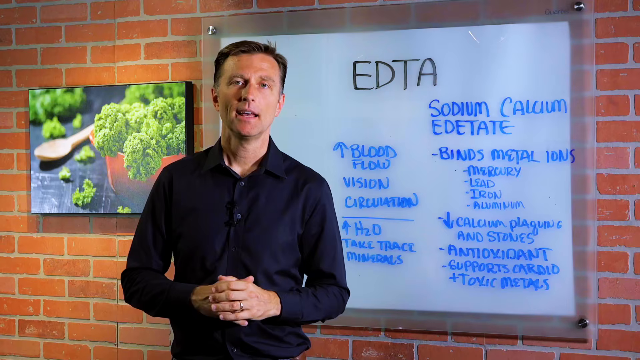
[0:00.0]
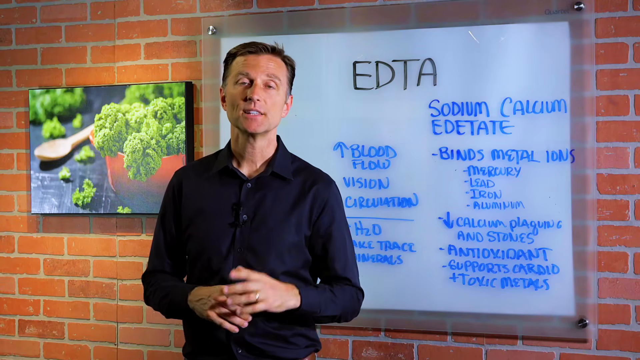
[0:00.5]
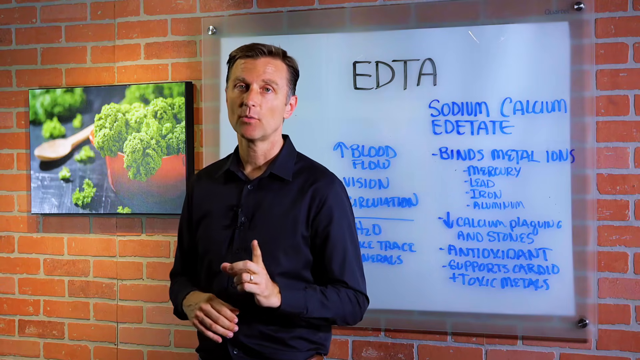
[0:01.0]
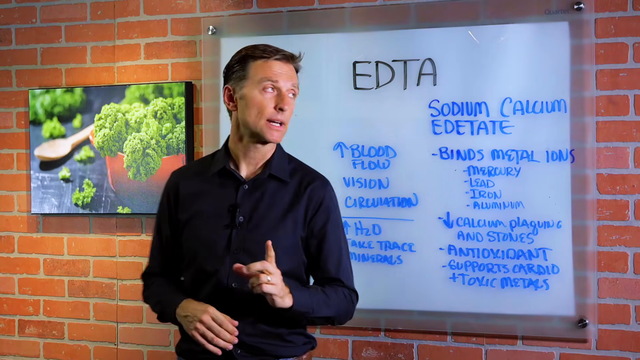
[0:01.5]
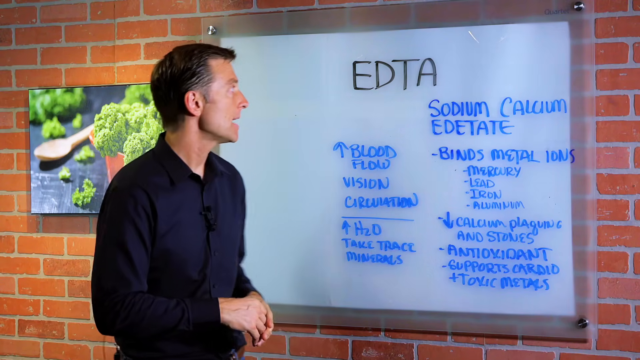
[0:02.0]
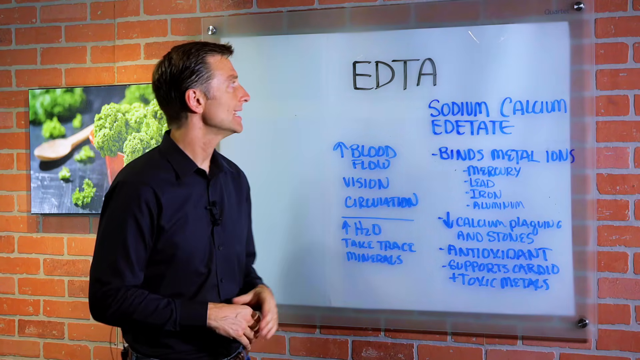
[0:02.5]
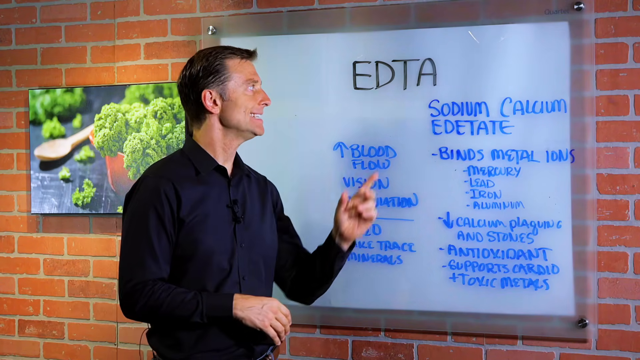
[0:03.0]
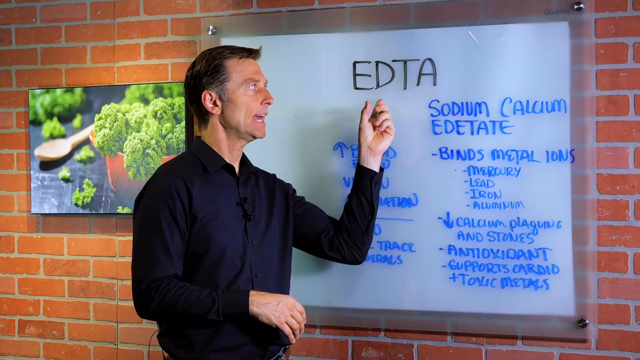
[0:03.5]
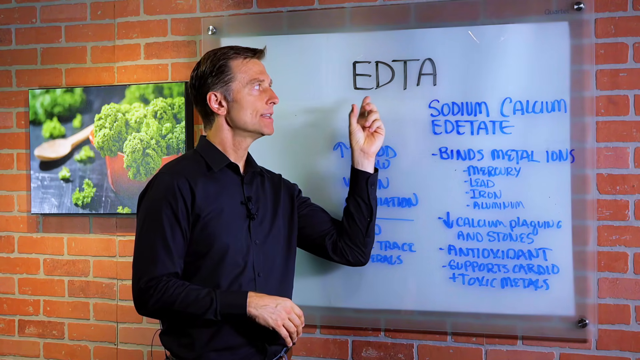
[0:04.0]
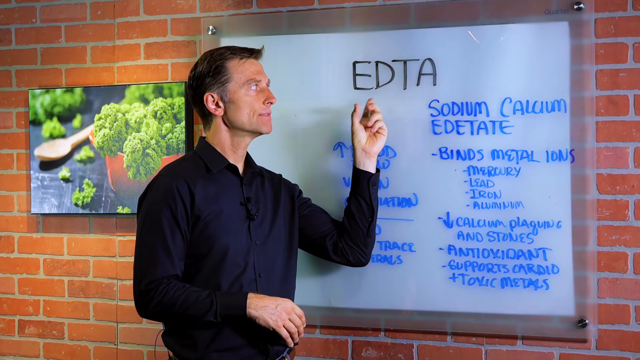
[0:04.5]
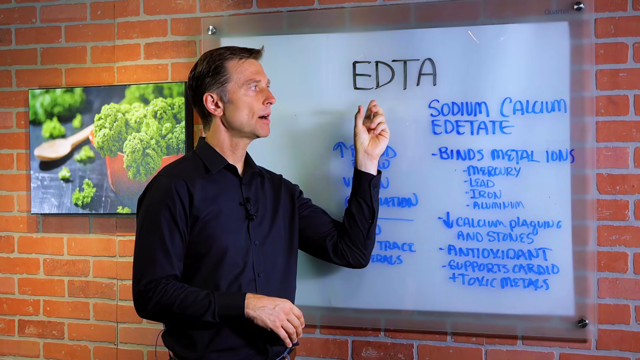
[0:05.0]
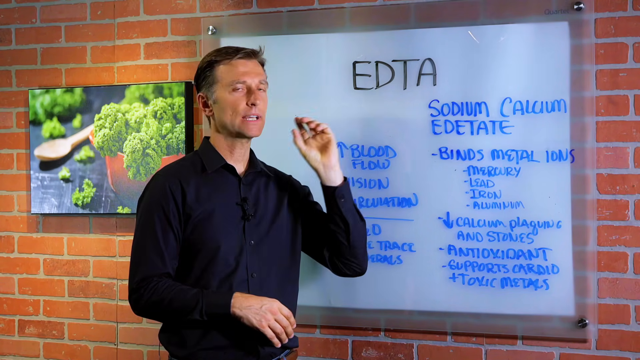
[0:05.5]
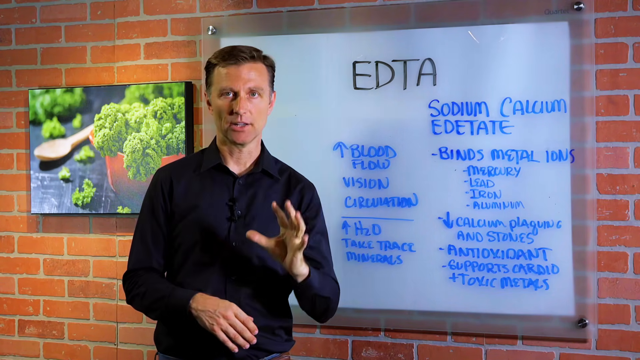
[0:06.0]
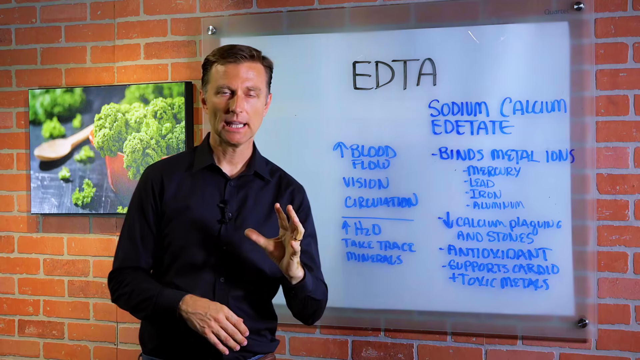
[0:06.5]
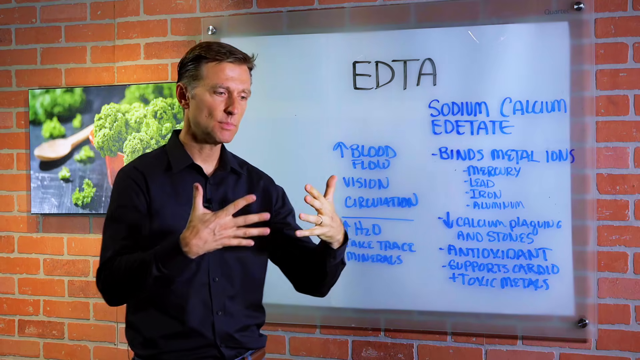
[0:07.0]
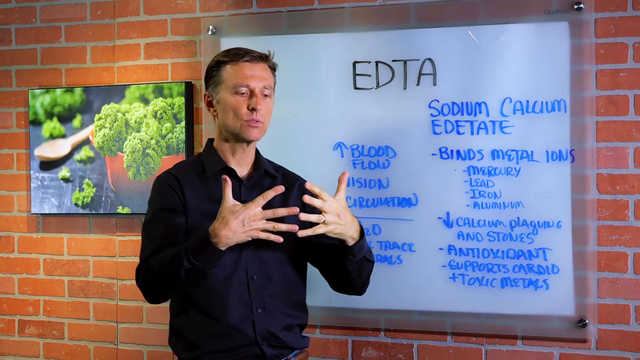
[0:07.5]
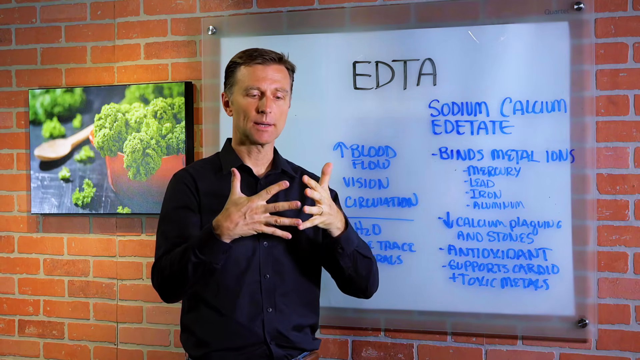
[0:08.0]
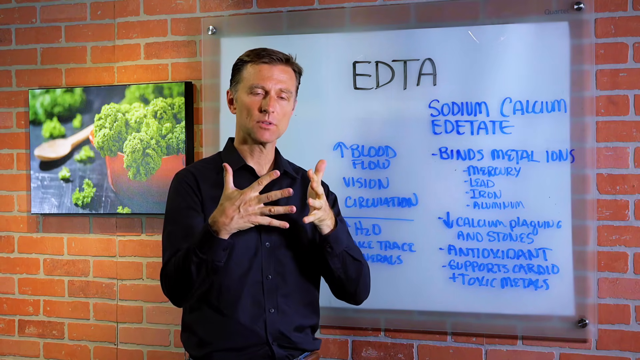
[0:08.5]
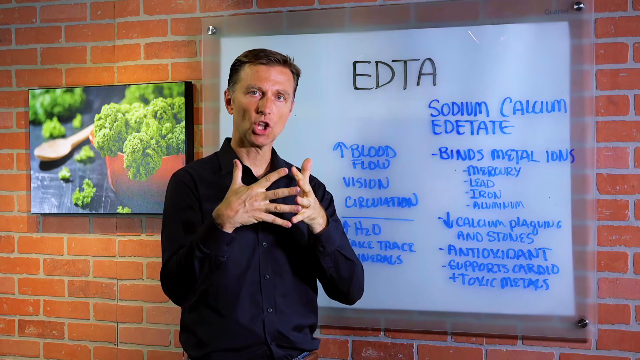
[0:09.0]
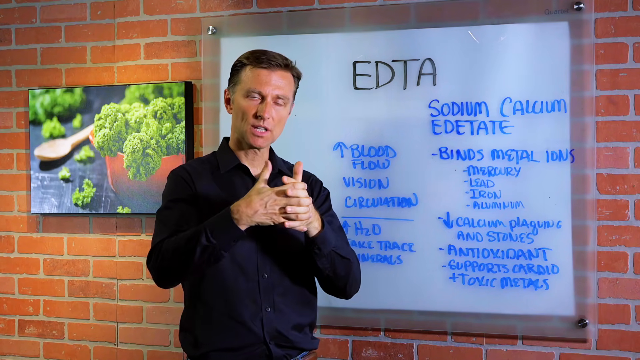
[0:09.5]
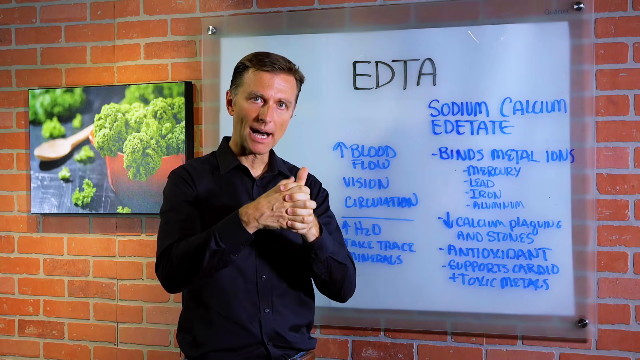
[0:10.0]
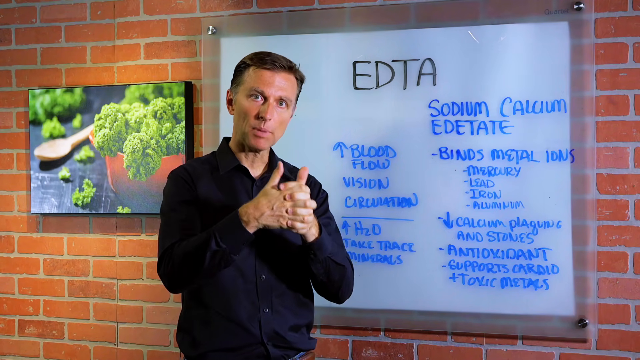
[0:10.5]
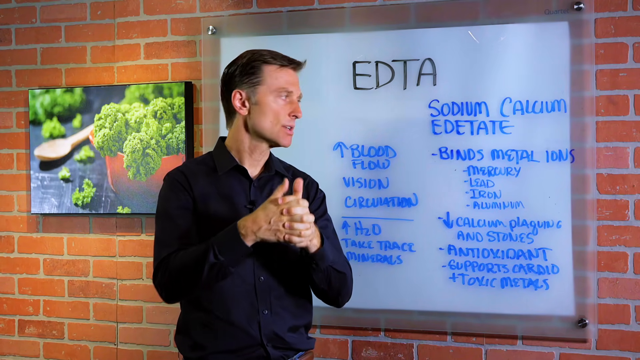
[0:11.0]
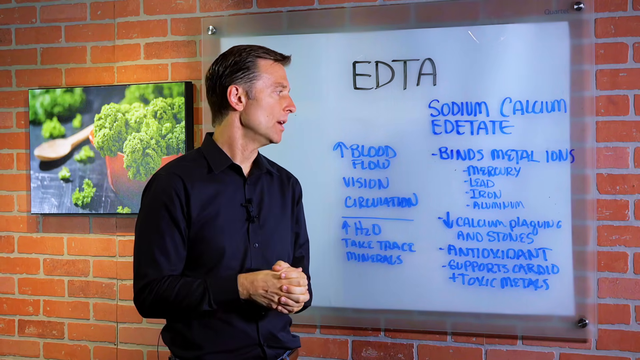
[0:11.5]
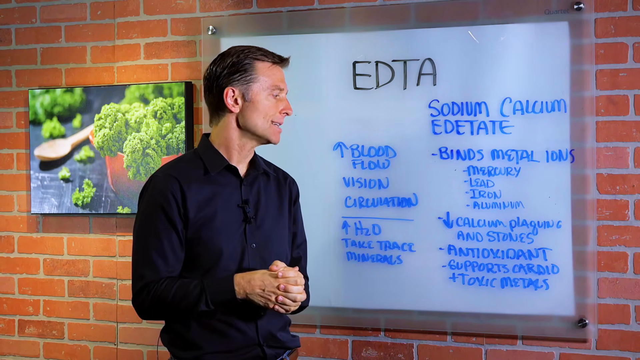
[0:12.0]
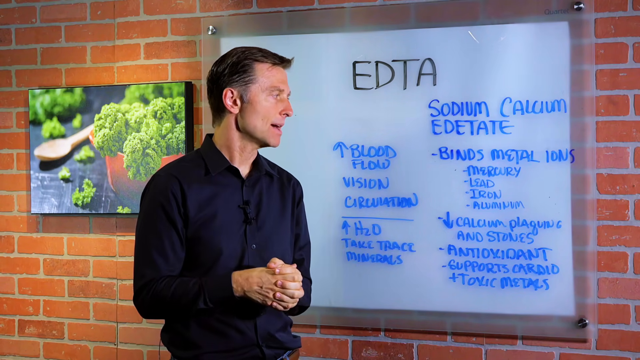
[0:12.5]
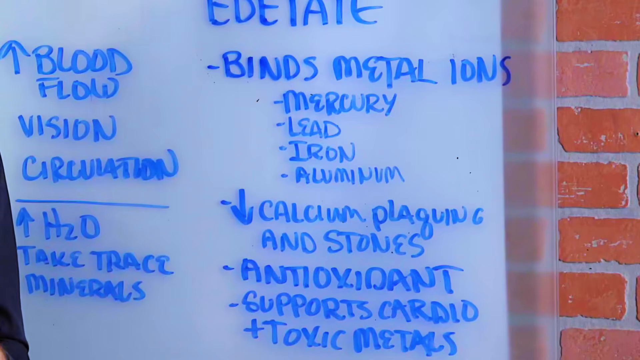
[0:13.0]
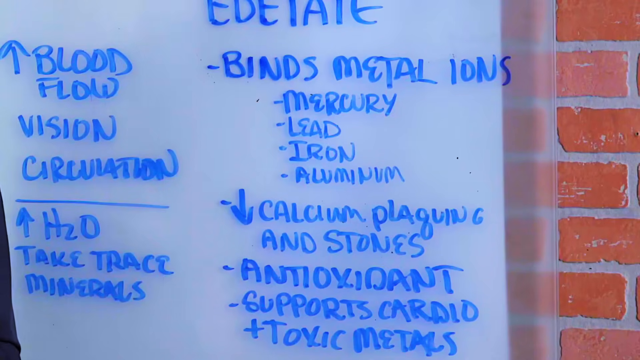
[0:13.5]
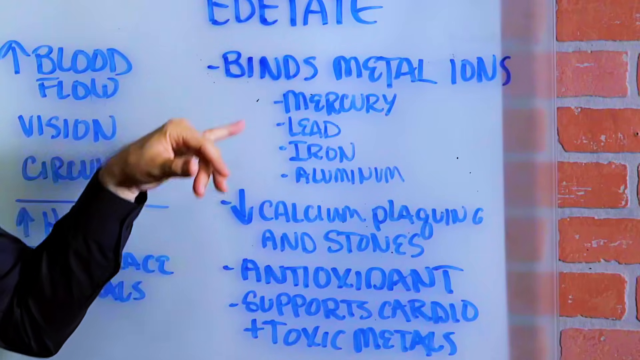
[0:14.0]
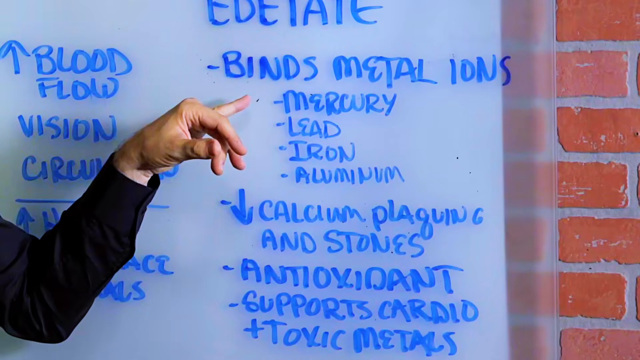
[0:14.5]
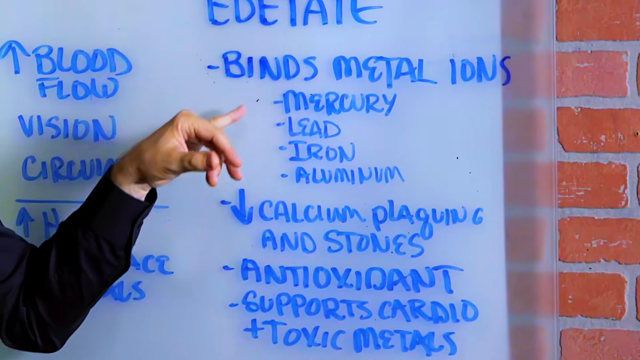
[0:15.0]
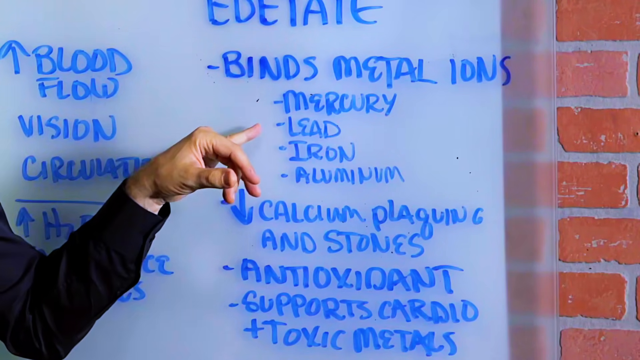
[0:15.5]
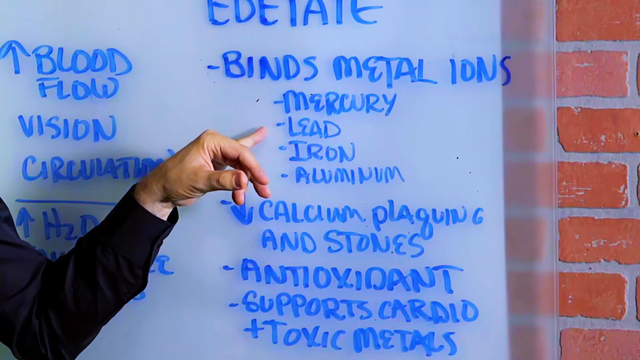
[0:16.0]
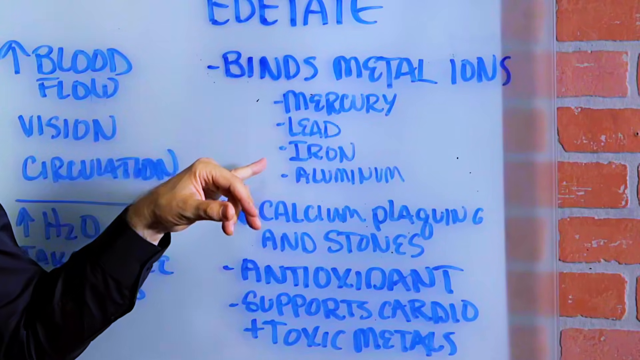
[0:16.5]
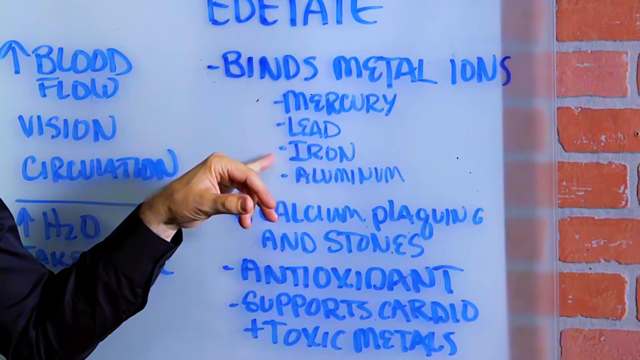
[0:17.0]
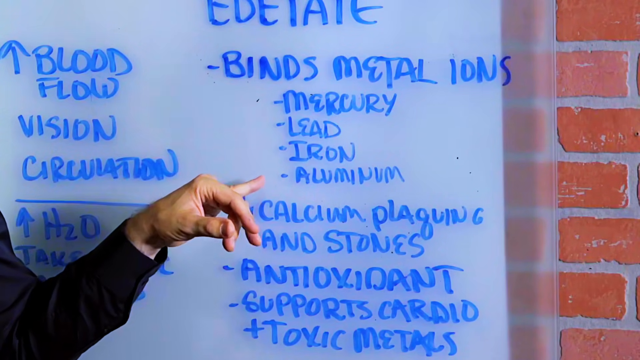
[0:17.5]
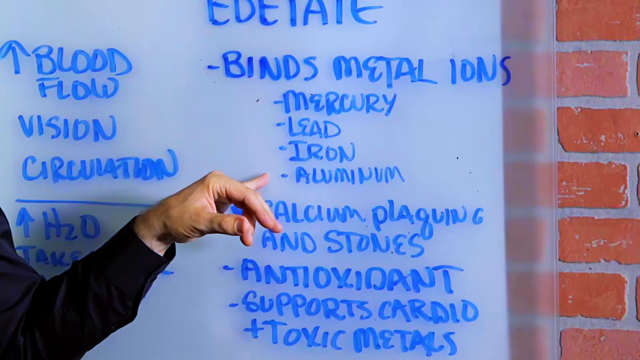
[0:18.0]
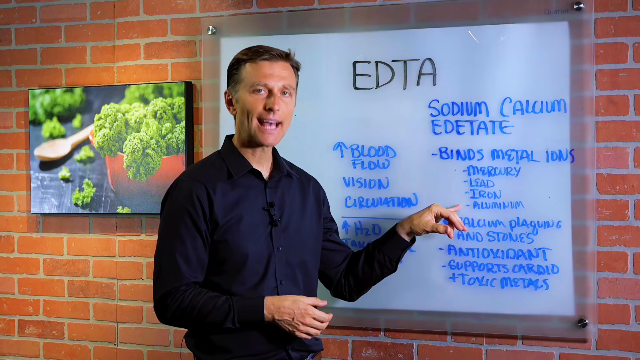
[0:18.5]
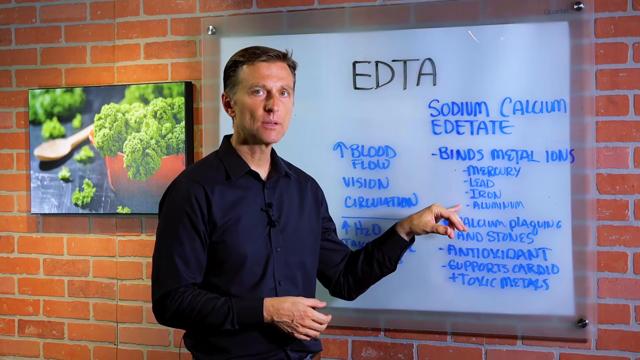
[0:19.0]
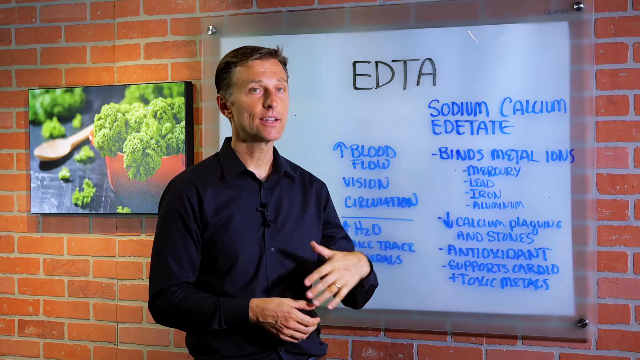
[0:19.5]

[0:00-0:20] An older man in a blue shirt has his hands crossed together. Behind him is a brick wall, and to his right is a picture of vegetables in a bowl and a wooden spoon on a black table. Right behind him is a whiteboard with various sentences and words on it. The man turns around to look at the whiteboard and points at it with his left hand, looking at the letters "EDTA". He turns back around with his left hand open, opens his hands and interlocks his fingers with his thumbs sticking out, then looks back at the board. The scene changes to the man using his left pinky finger to point at the word "mercury" on the board, then "lead", then "iron", then "aluminum". The view zooms back out to show the full man, still pointing at the board with his left pinky.